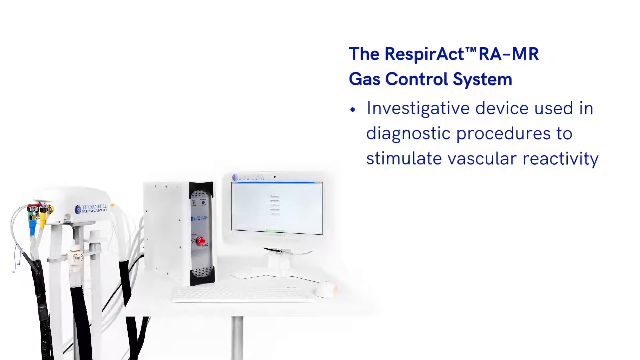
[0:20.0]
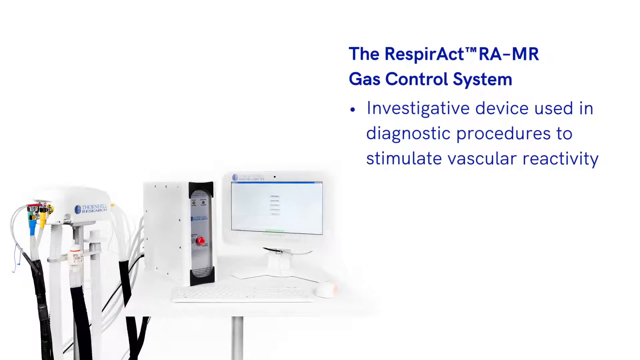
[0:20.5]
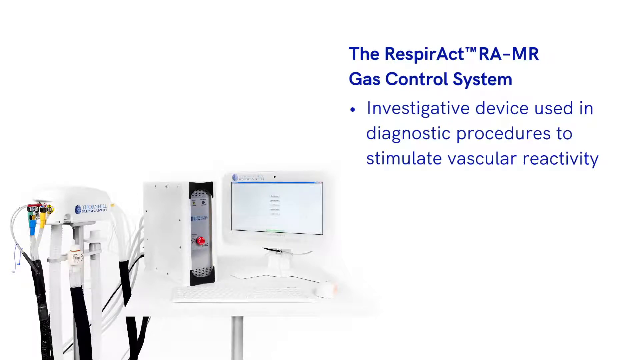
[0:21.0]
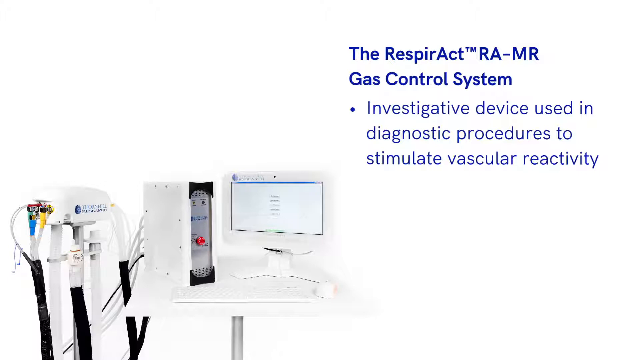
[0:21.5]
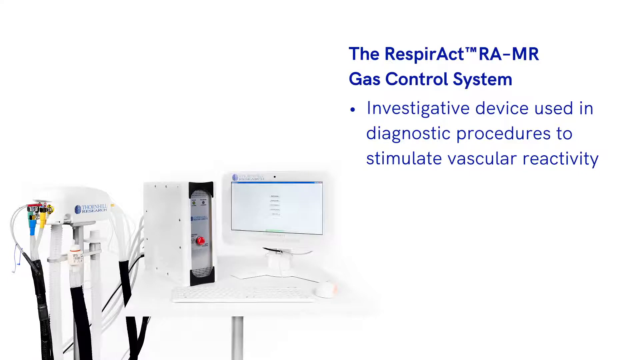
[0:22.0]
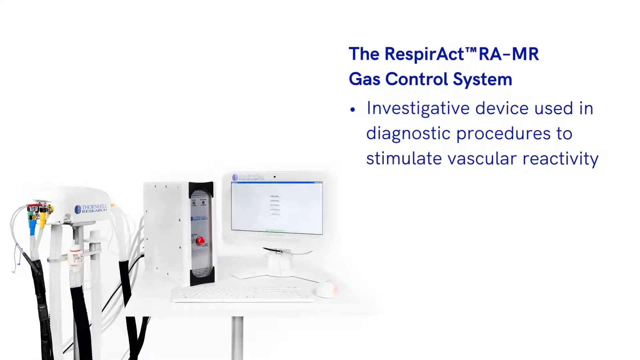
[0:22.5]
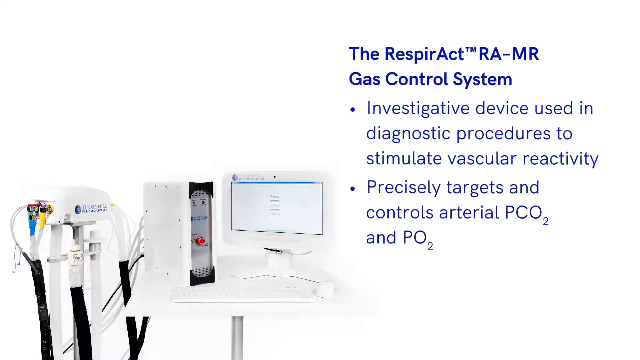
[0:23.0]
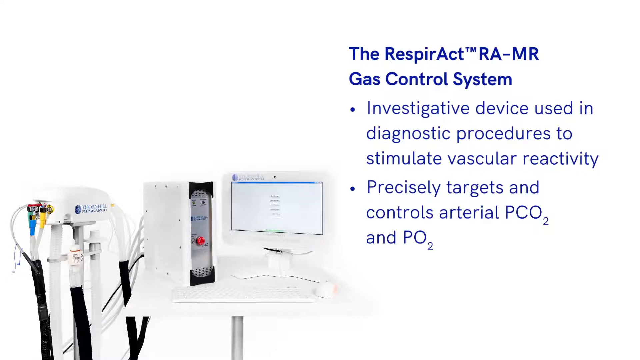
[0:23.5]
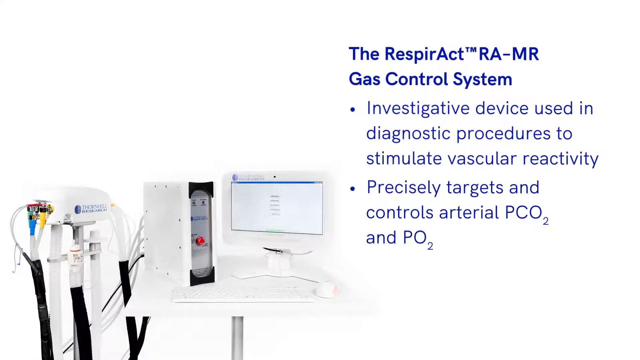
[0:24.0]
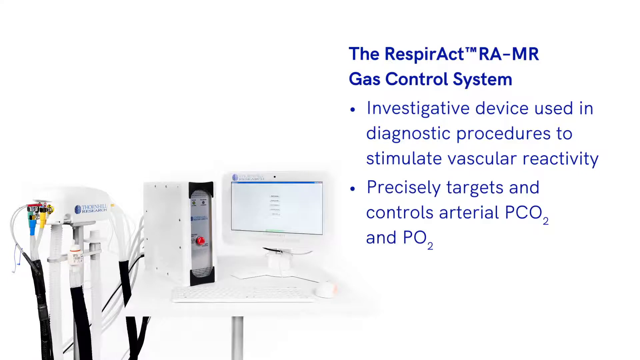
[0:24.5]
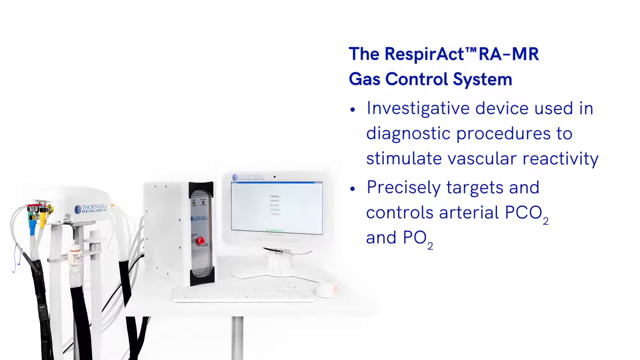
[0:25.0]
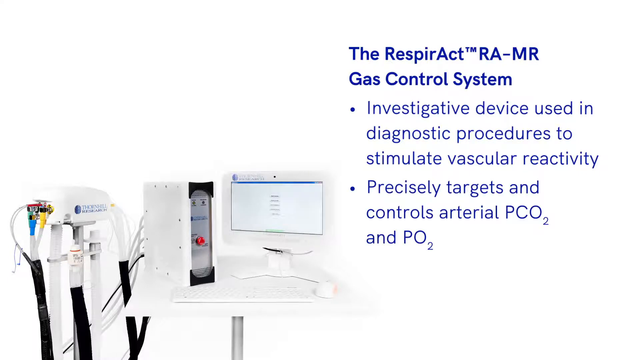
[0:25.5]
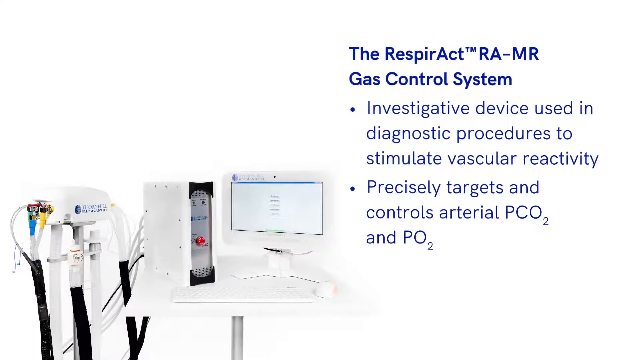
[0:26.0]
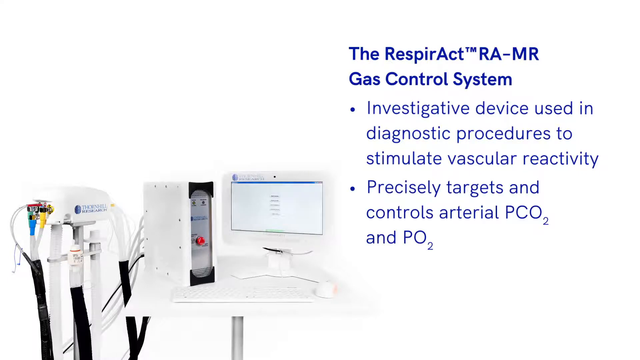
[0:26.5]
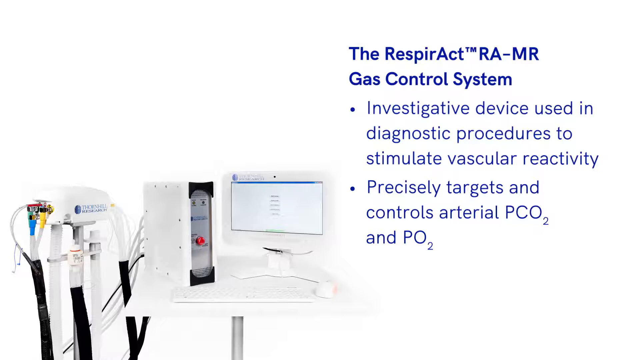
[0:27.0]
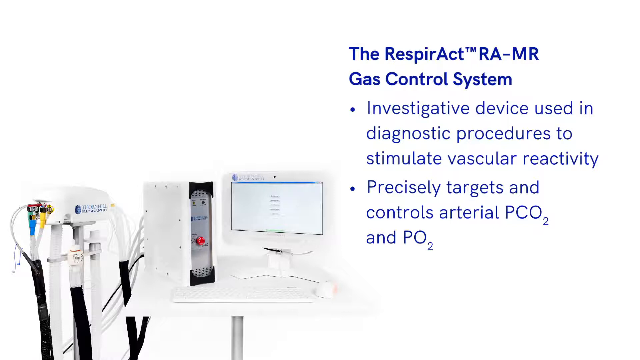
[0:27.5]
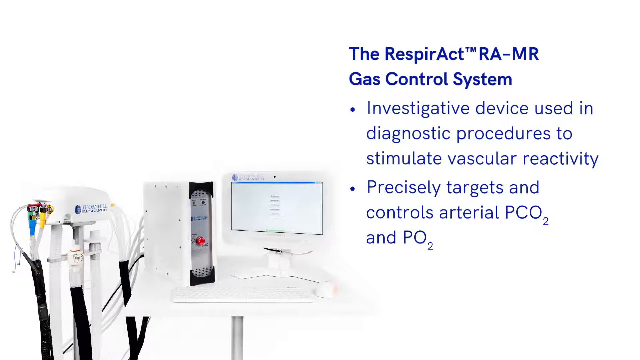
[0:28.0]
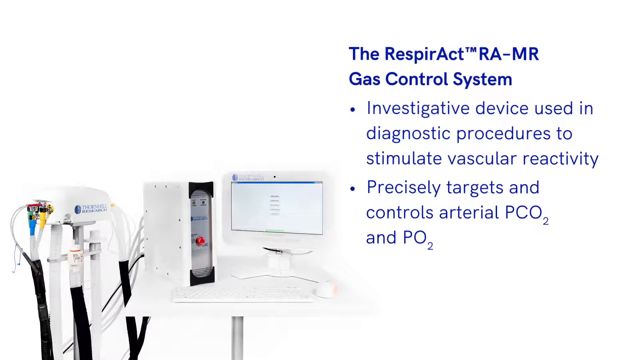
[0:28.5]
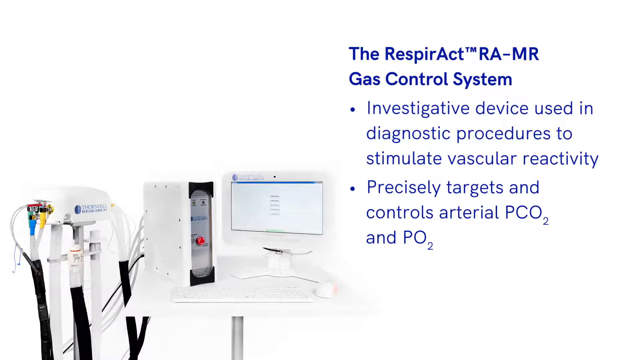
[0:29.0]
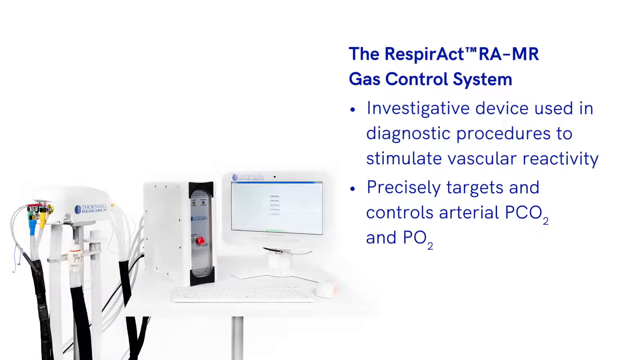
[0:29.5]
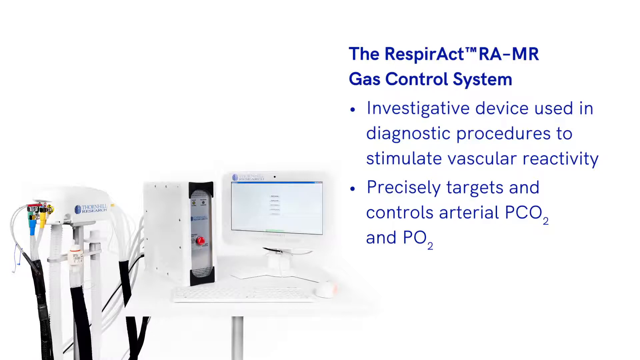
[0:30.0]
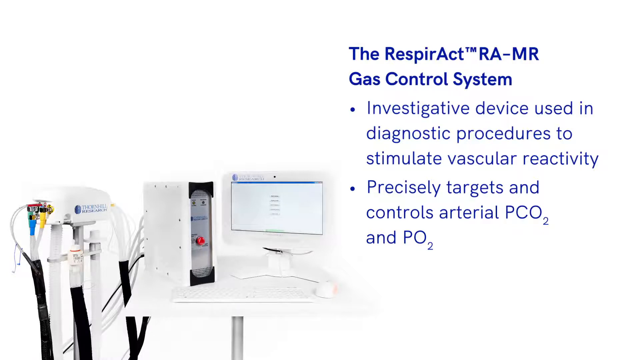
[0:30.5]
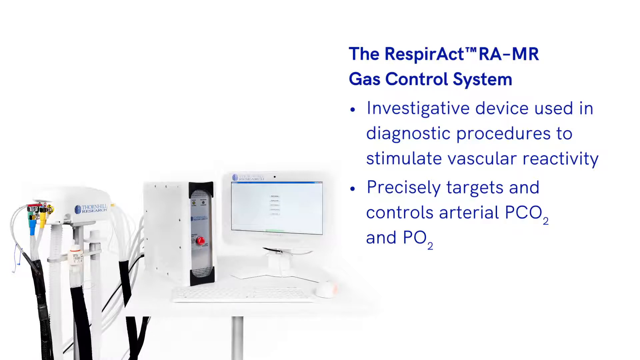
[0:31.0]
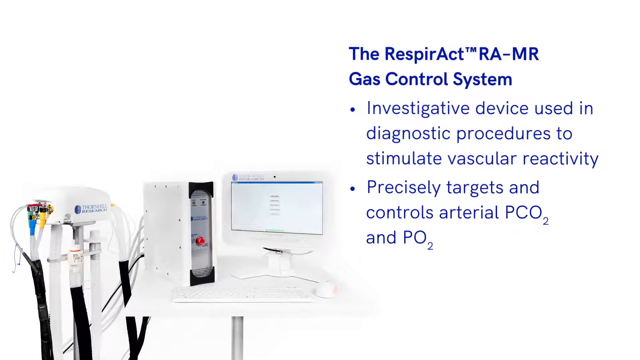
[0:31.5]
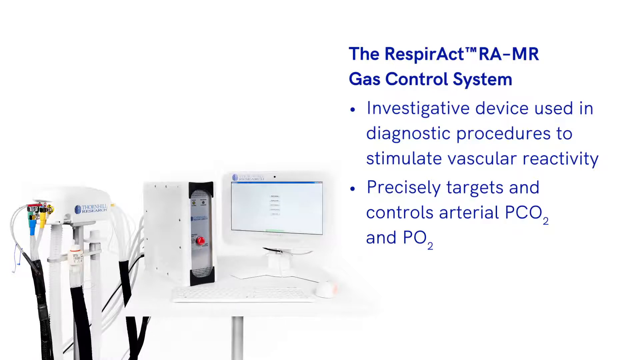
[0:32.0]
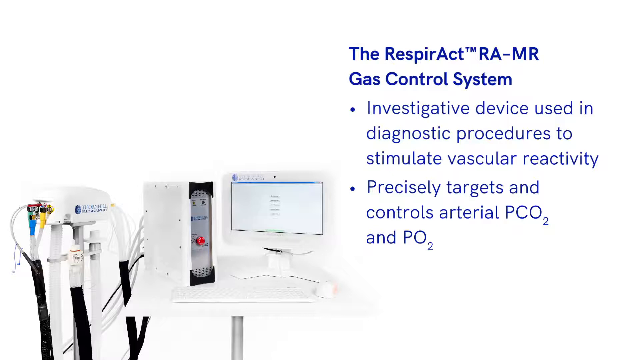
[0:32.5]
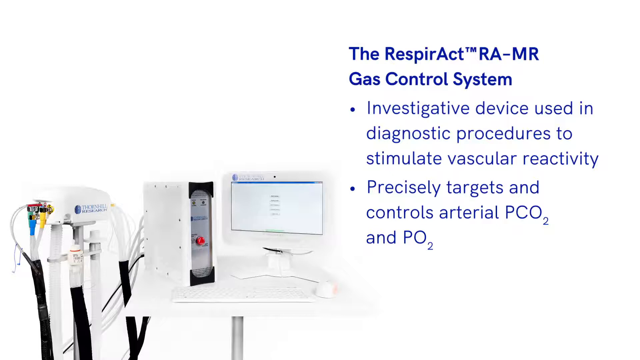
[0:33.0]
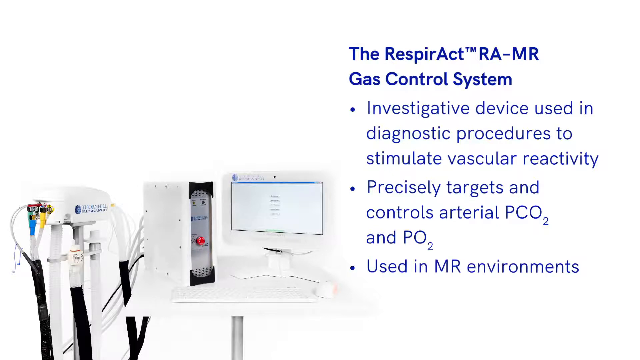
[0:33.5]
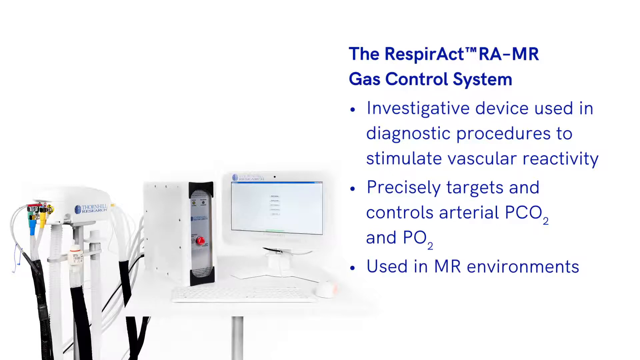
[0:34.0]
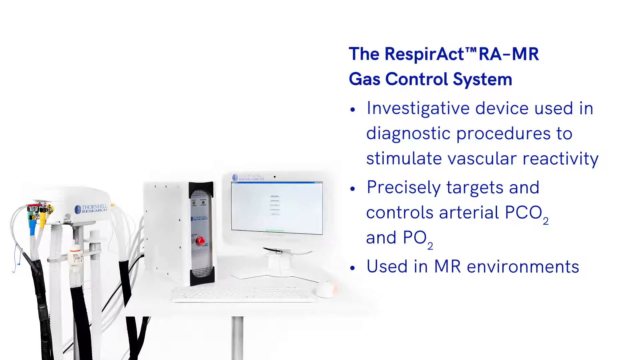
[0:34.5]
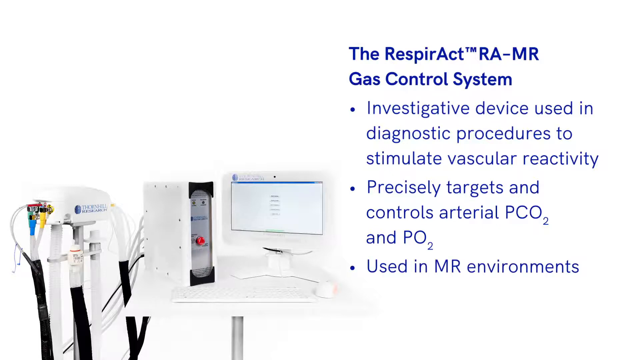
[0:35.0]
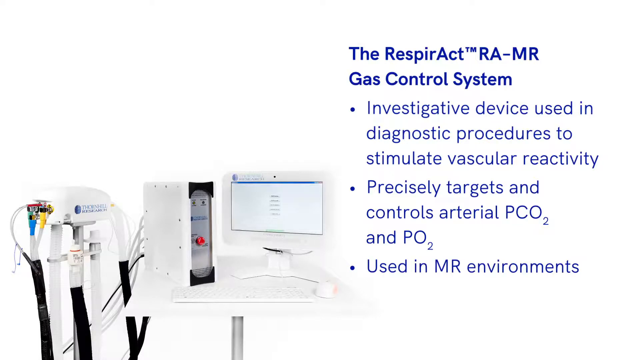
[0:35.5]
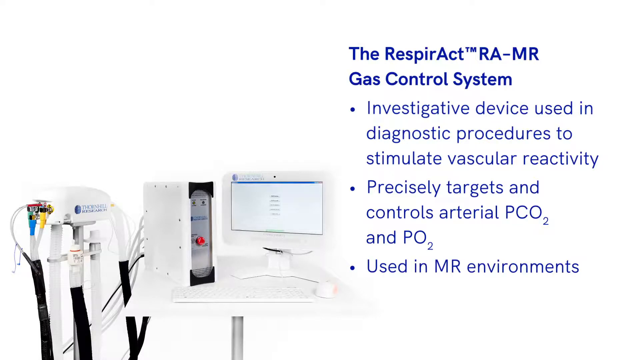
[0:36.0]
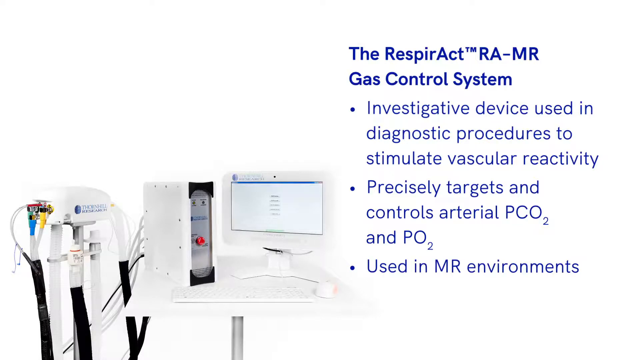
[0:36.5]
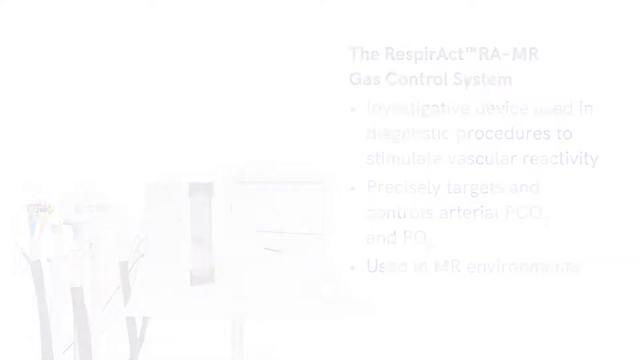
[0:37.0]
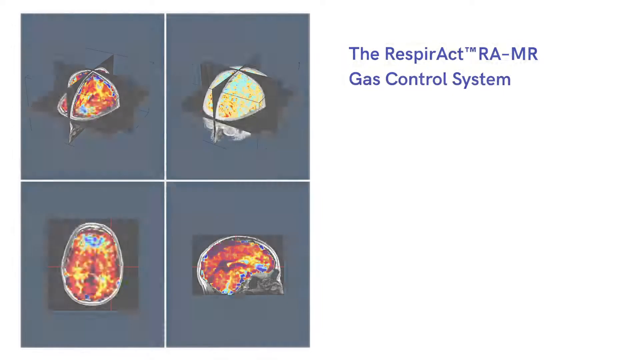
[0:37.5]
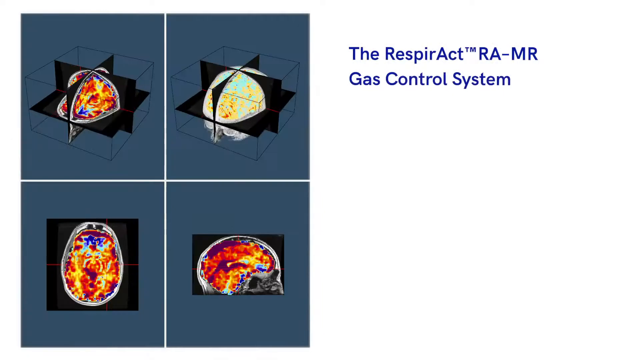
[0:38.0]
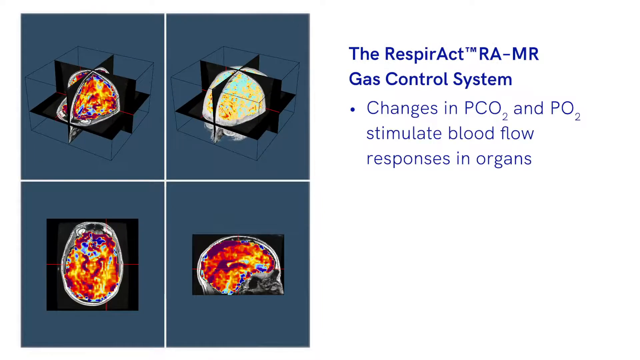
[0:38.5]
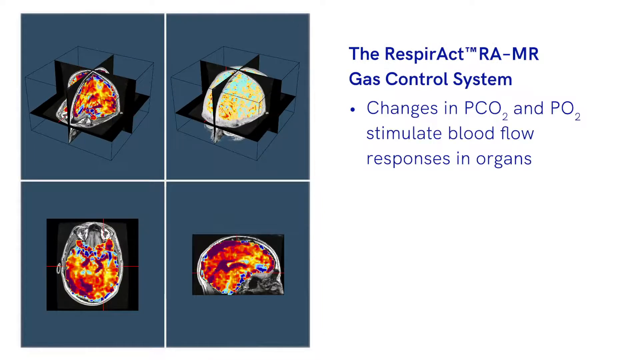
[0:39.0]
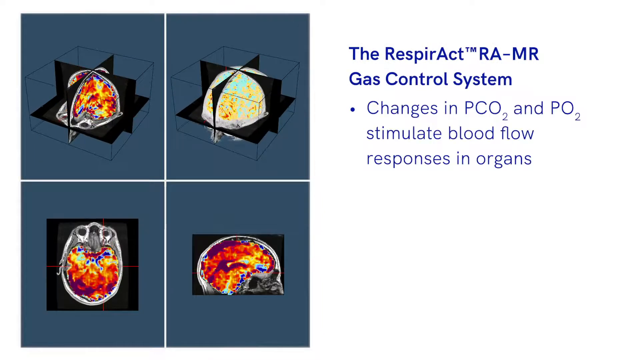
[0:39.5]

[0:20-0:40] Text about the Thornhill Research Respiract RA-MR gas control system reads that it is "an investigative device used in the diagnostic procedures to stimulate vascular reactivity," that it "precisely targets and controls arterial PCO2 and PO2," and that it is "used in MR environments." MRIs from the different tests done with it are then shown, along with text stating that "changes in PCO2 and PO2 stimulate blood flow responses in the organs."